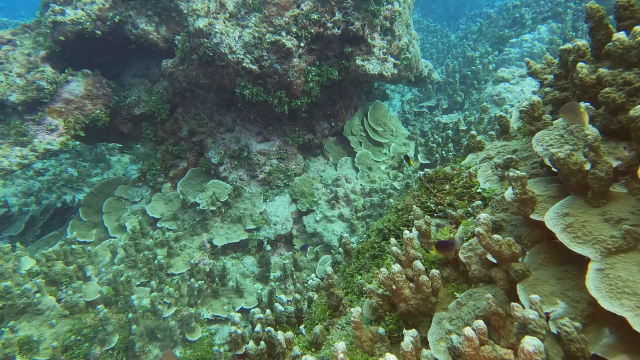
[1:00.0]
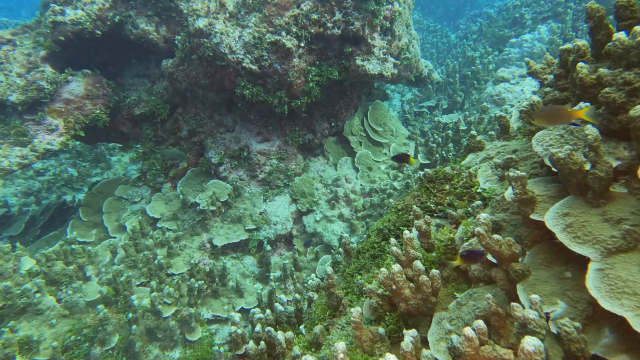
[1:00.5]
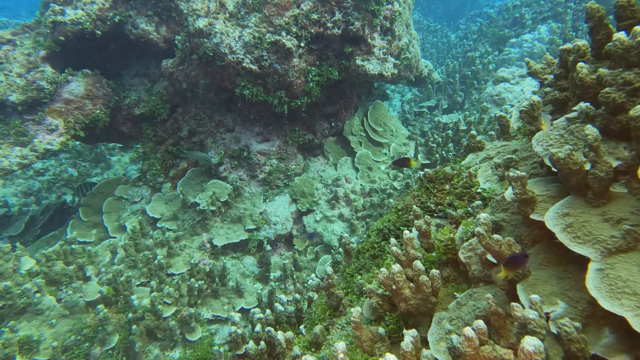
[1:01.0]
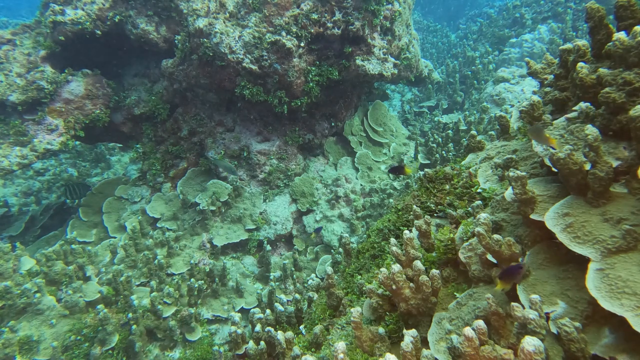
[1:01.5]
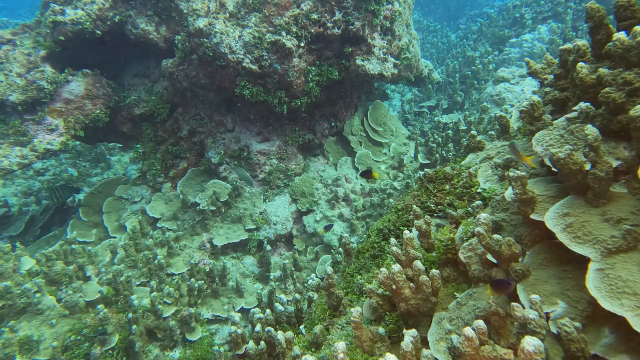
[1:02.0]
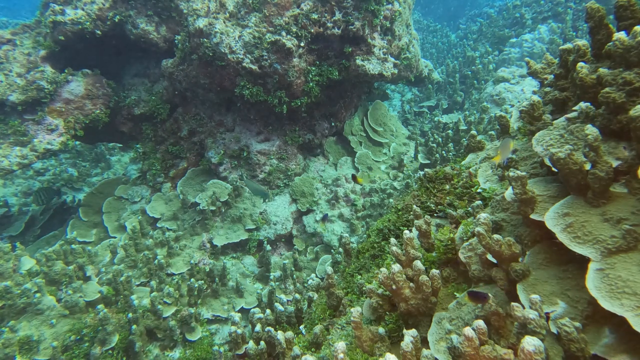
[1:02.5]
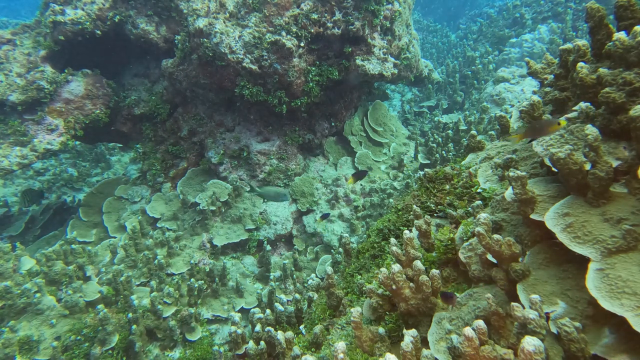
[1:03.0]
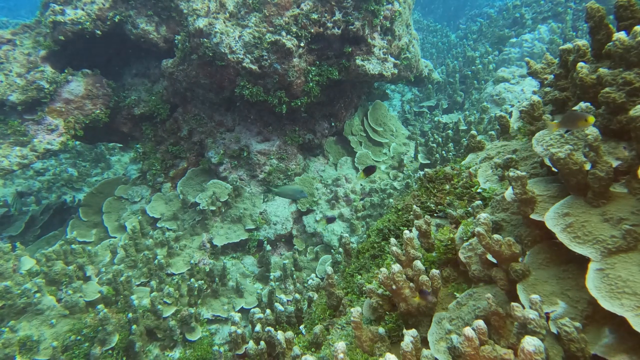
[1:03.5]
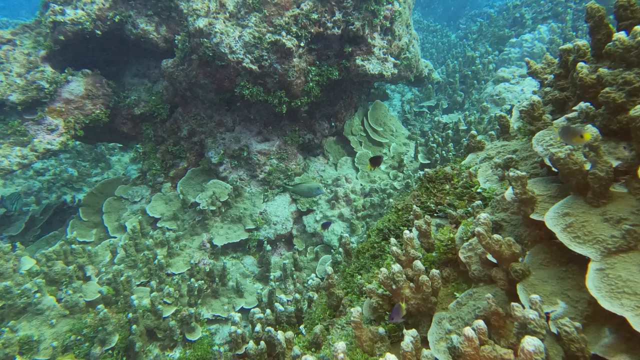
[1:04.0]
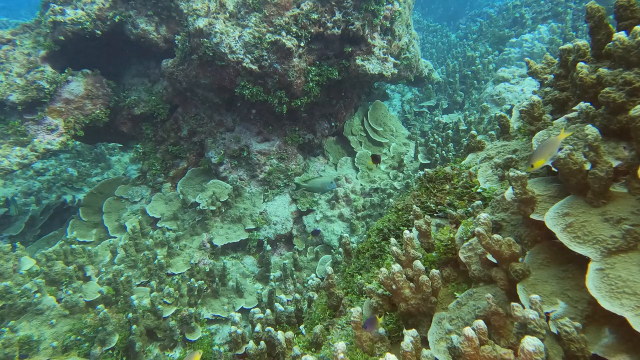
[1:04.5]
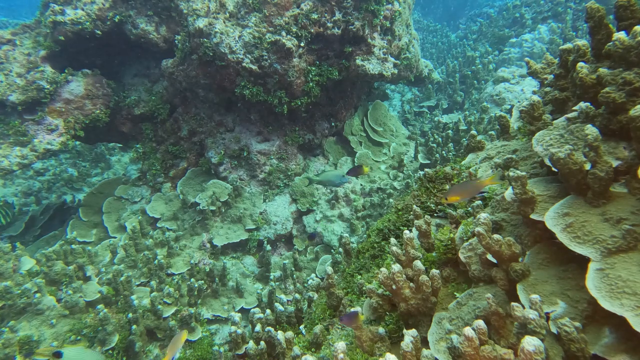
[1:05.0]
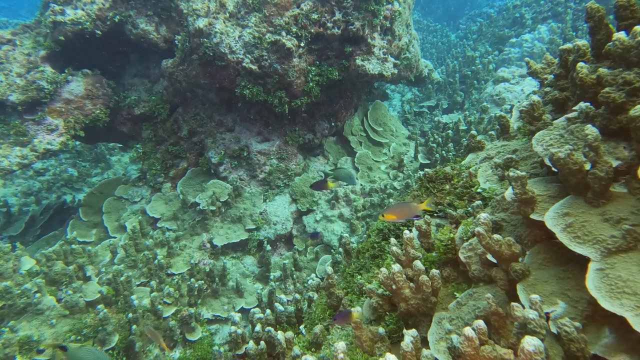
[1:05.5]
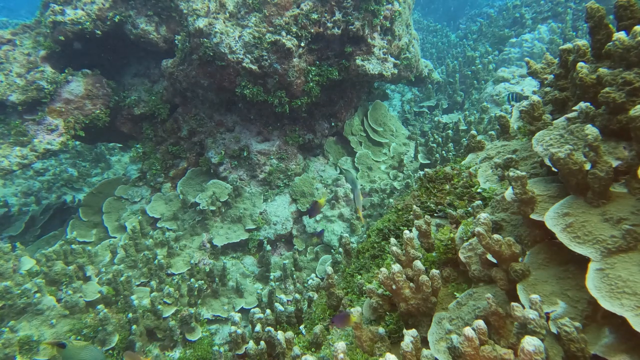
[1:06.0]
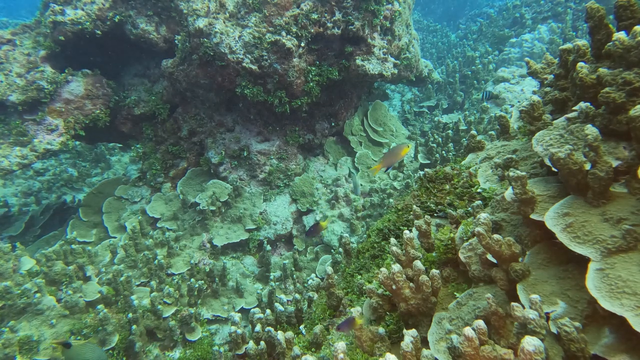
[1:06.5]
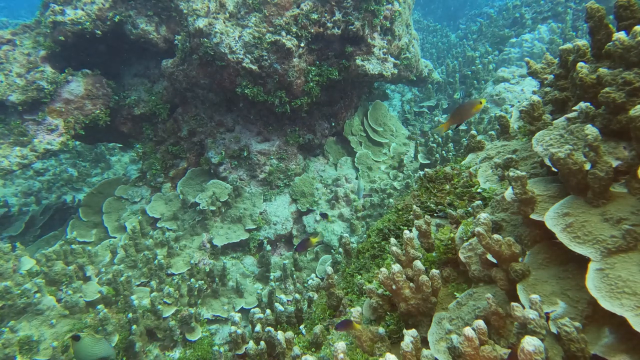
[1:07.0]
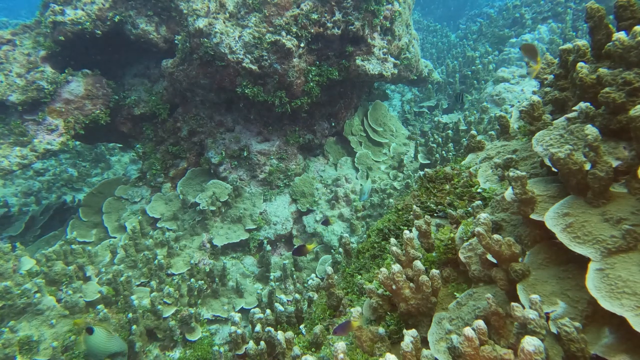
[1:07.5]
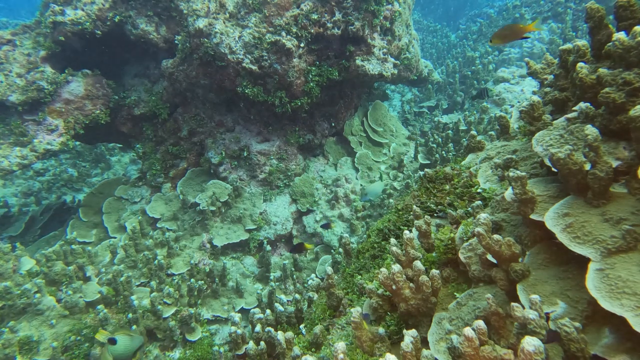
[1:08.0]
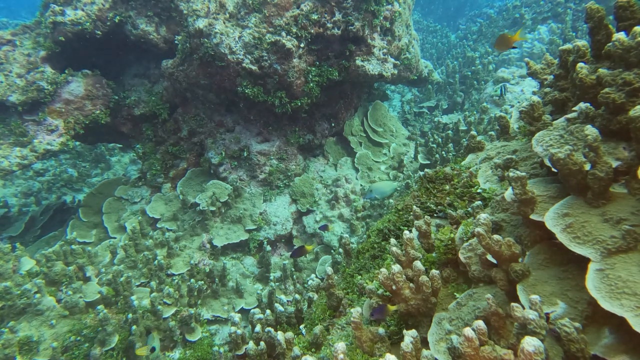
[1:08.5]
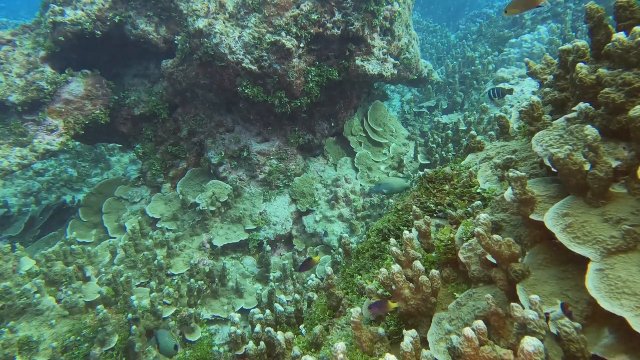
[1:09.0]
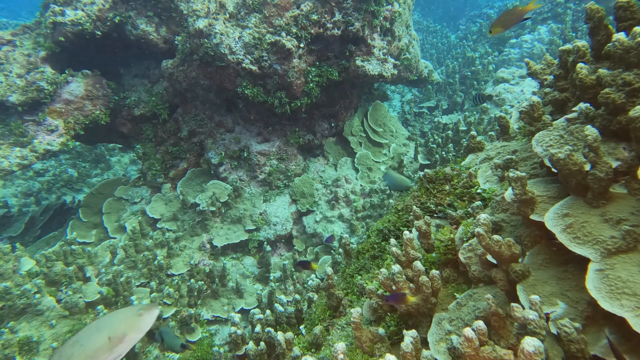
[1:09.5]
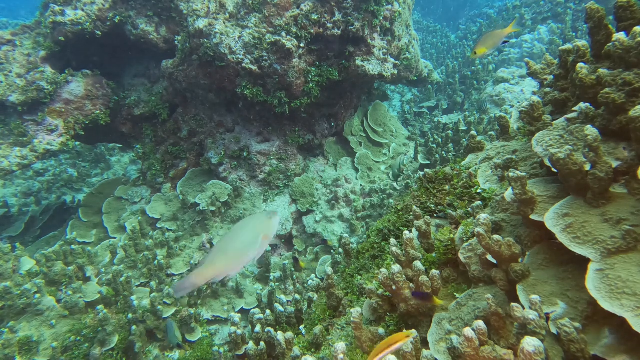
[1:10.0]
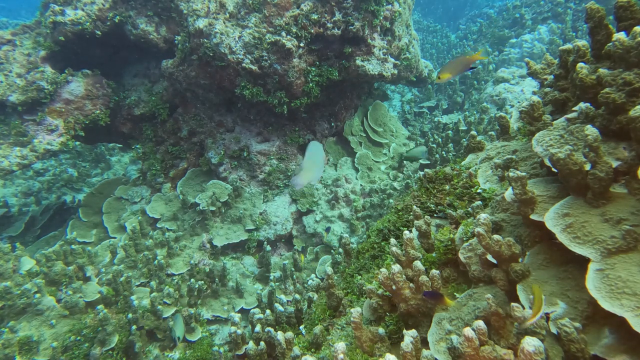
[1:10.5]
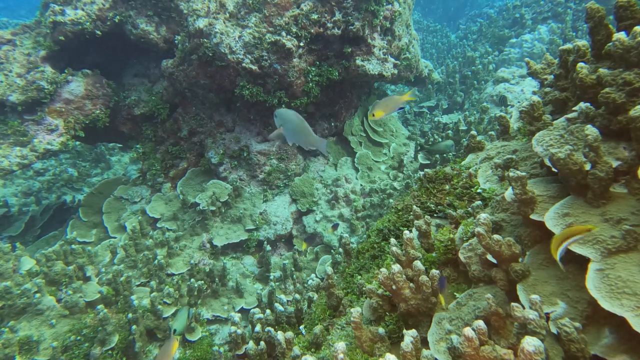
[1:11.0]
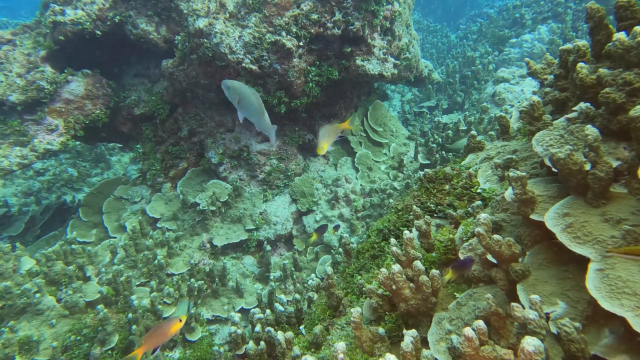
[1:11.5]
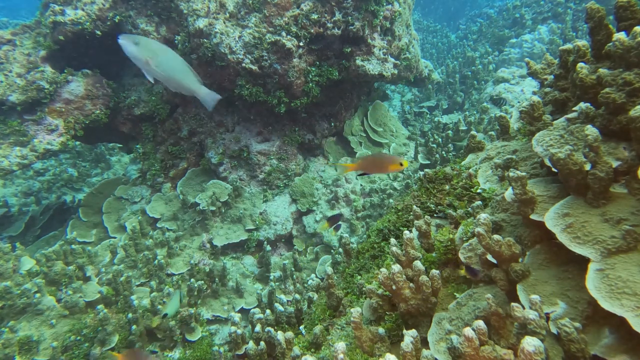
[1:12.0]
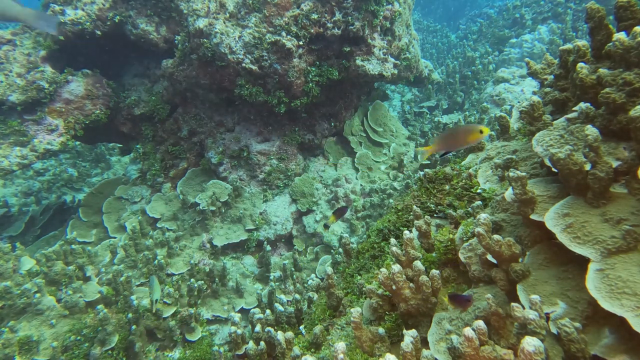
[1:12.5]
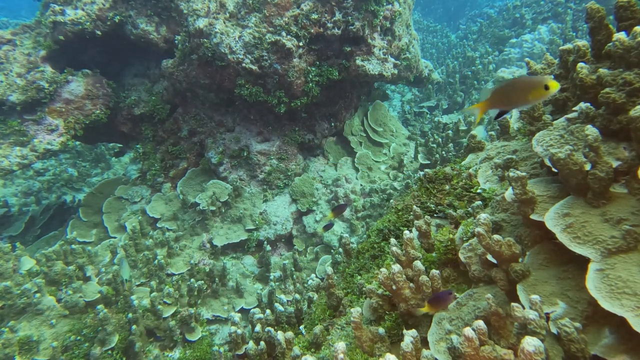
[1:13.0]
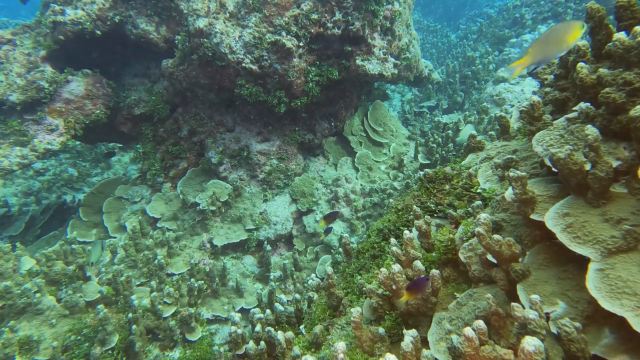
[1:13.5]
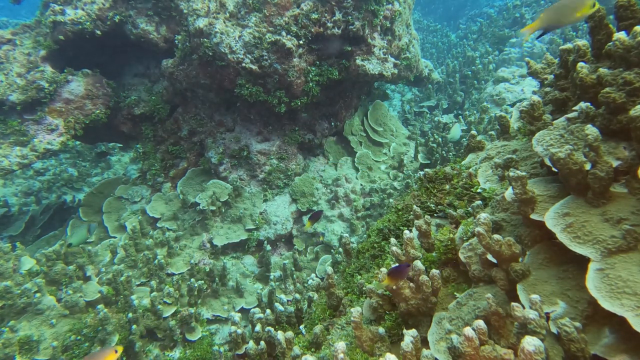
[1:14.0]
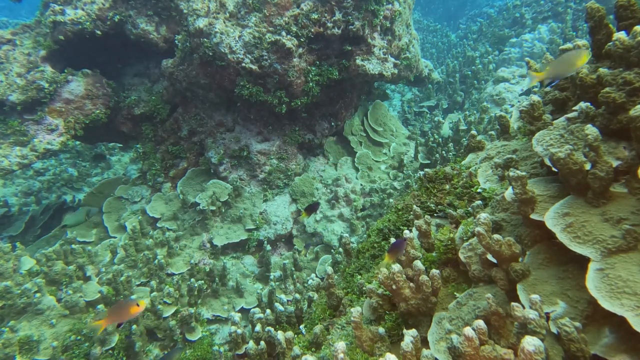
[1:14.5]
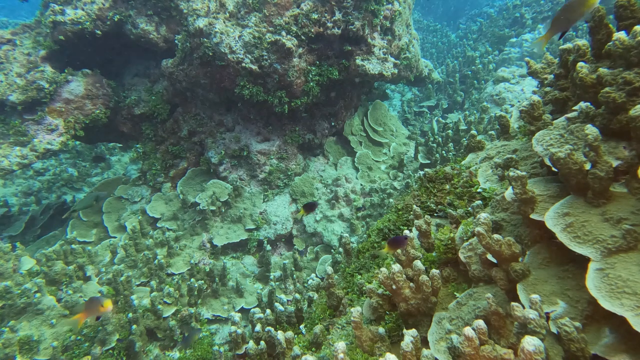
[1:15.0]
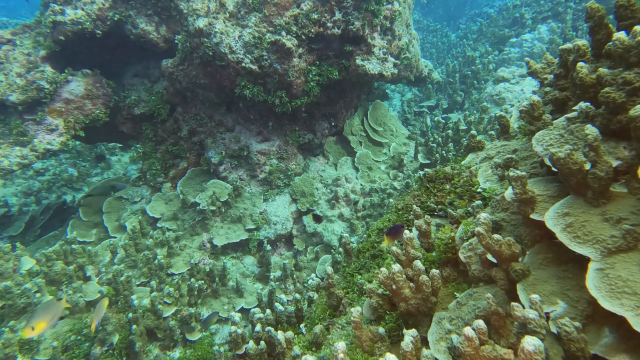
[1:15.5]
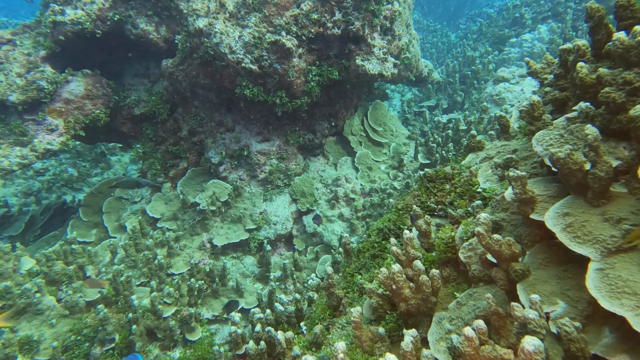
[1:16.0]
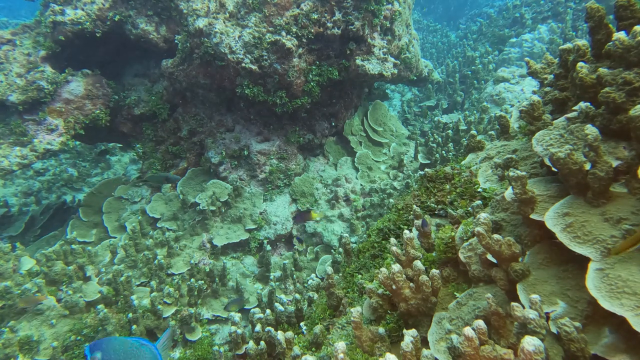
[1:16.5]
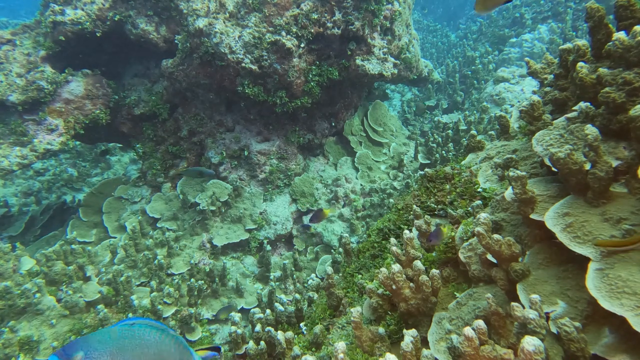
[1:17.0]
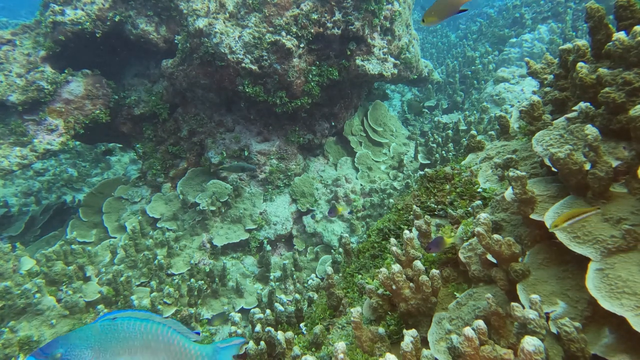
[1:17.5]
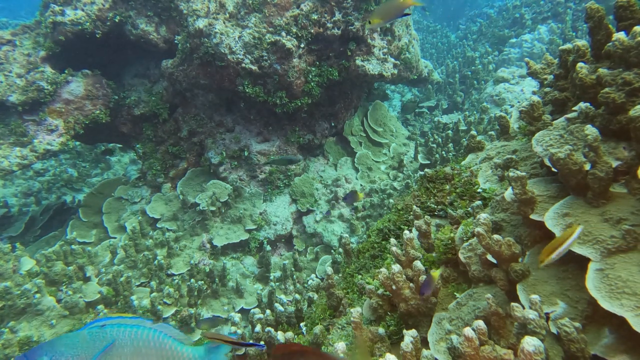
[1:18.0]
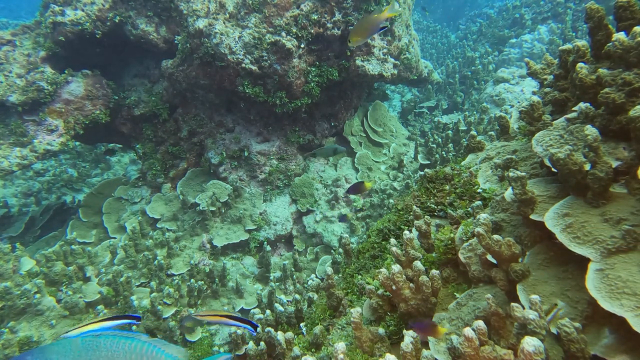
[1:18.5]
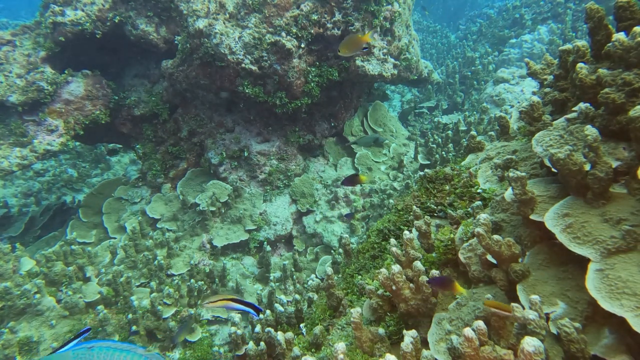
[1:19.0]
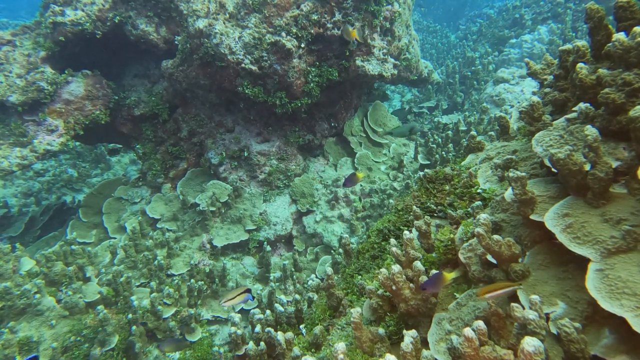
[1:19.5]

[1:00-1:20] The reef scene in the ocean continues and remains relatively peaceful, with no visible fish attacking other fish and no sharks or other larger predators. The fish appear to be swimming around, presumably feeding. Toward the middle of the shot, a larger blue fish appears in the bottom left corner. It is very bright blue and stands out among the other fish, and it is a bit larger than many of the smaller reef fish.